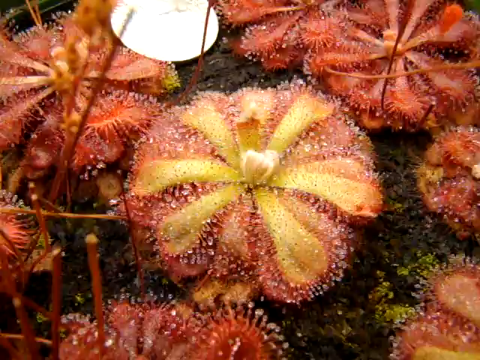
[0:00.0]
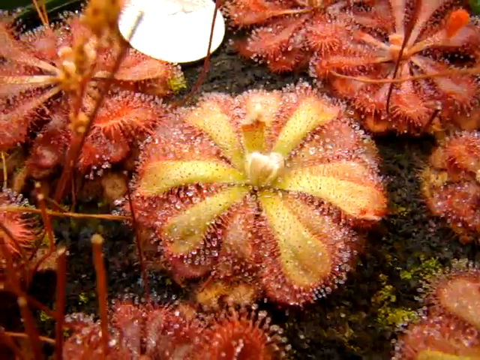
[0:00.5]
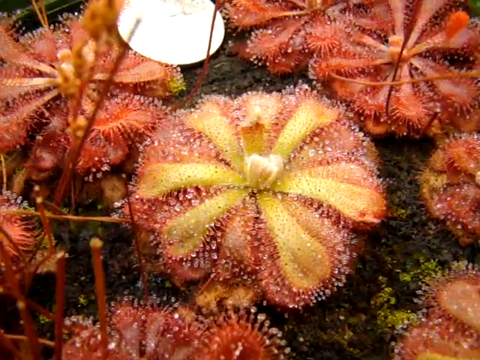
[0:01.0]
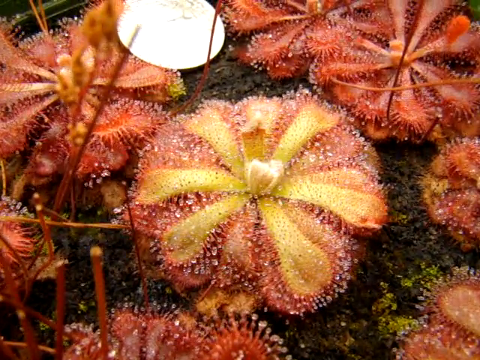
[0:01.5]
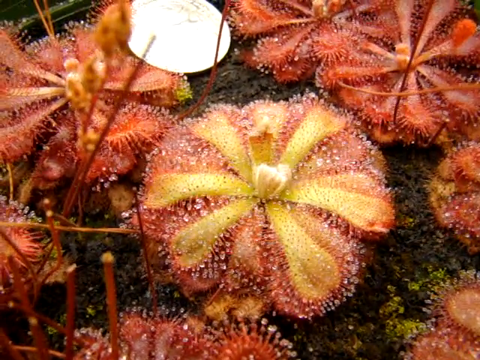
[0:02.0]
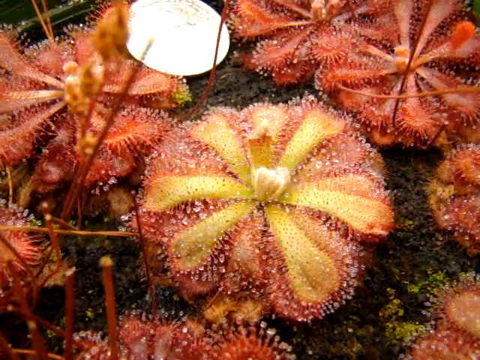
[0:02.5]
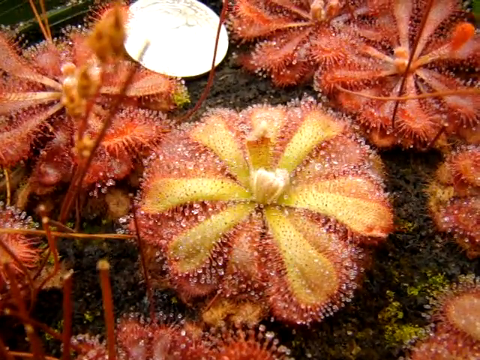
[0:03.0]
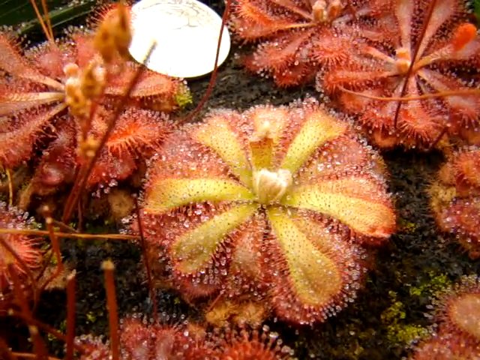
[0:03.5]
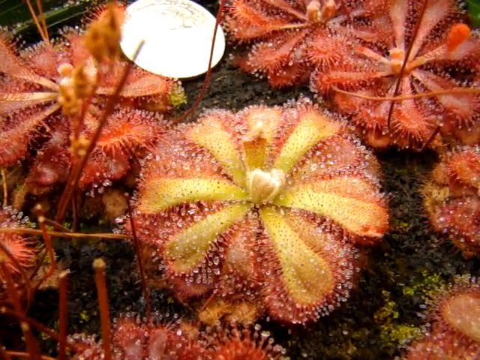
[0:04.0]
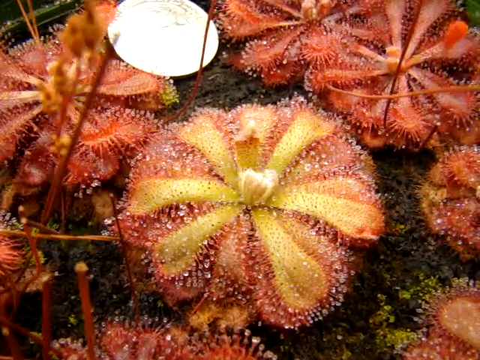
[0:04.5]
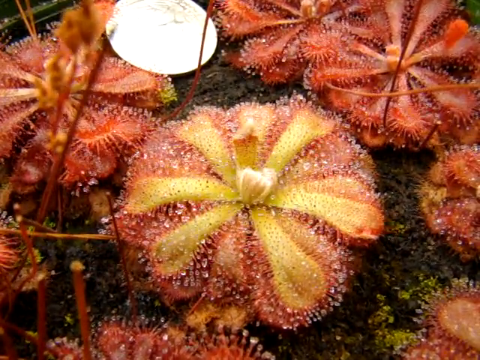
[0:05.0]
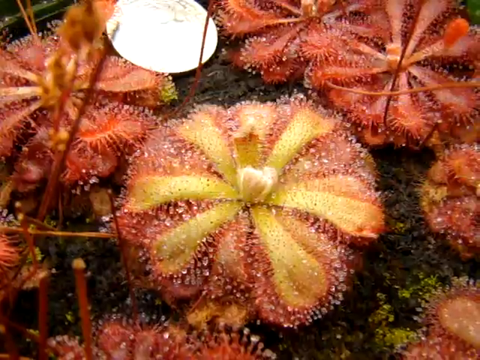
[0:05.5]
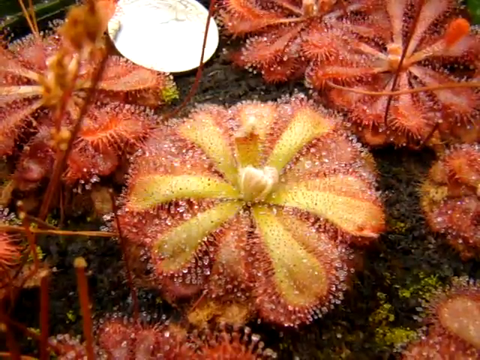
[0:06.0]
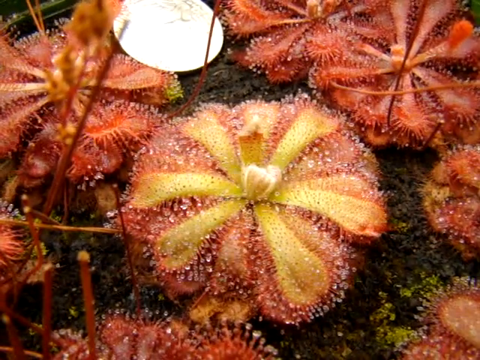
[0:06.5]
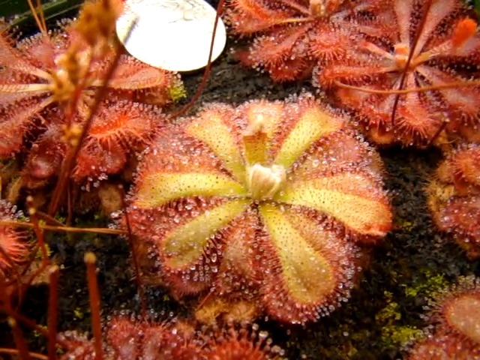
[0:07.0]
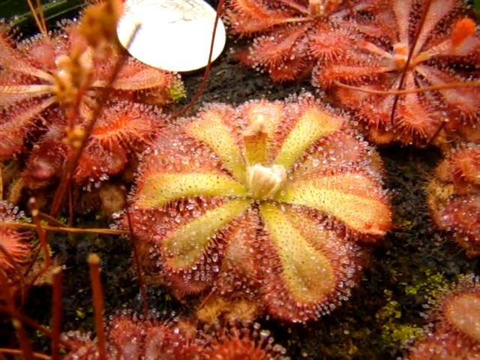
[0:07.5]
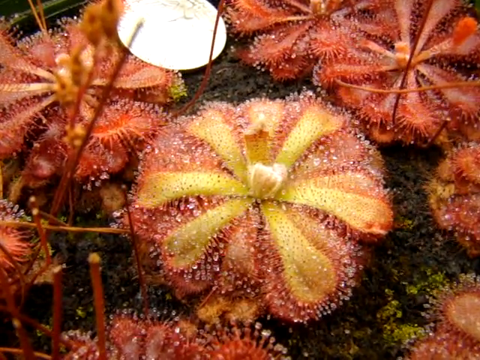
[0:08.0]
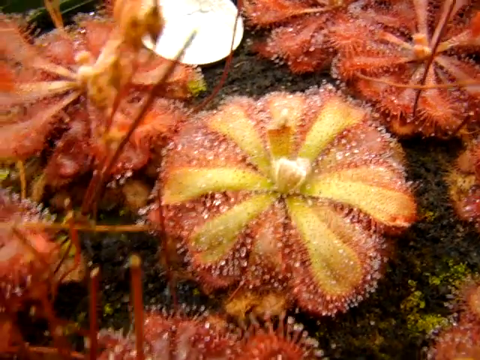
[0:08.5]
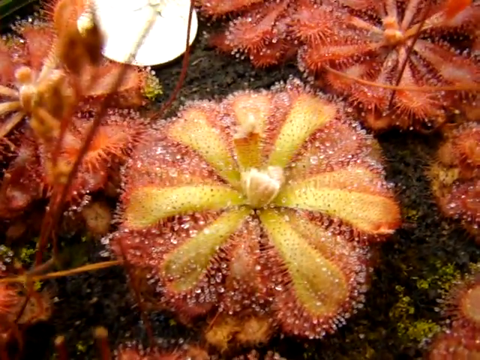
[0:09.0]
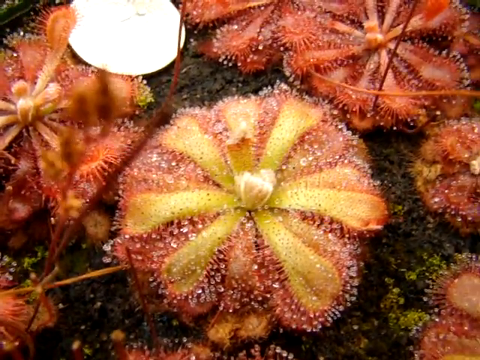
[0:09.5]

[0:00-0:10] A red and yellow plant grows right at ground level, with only a very short stem. It looks as if it has been drizzled on, as there is some water on top of the plant, and there is small greenery right underneath it.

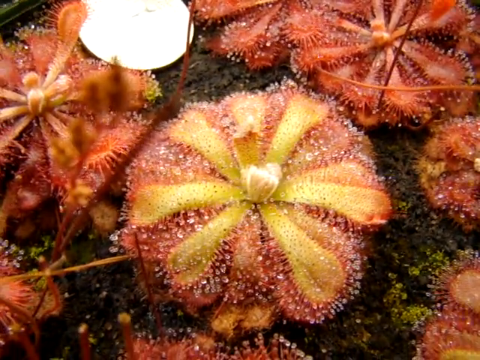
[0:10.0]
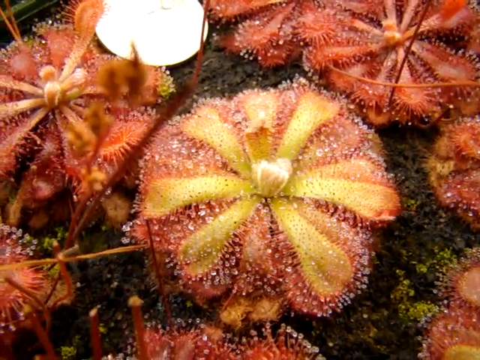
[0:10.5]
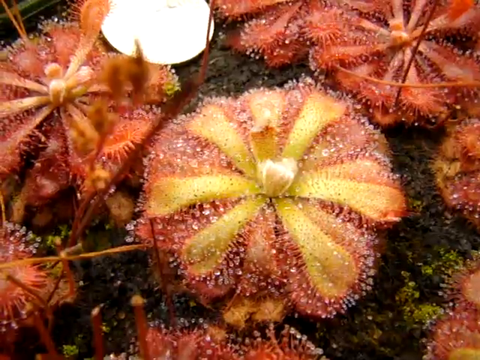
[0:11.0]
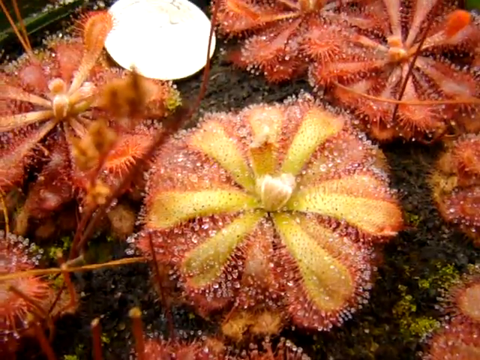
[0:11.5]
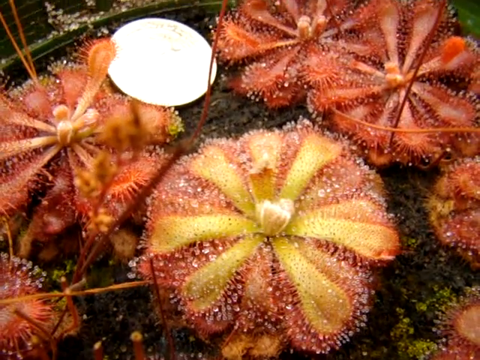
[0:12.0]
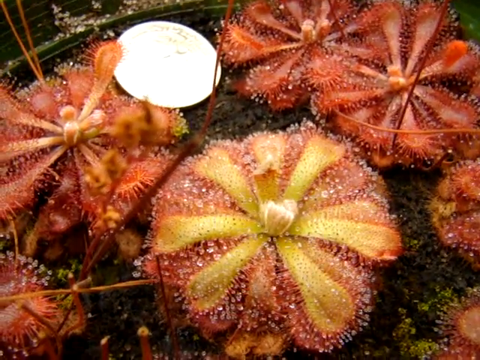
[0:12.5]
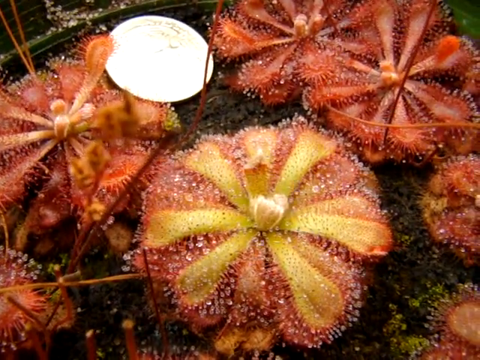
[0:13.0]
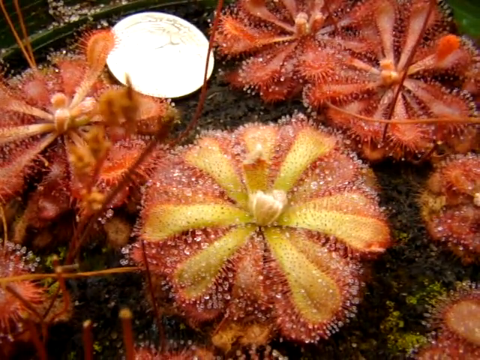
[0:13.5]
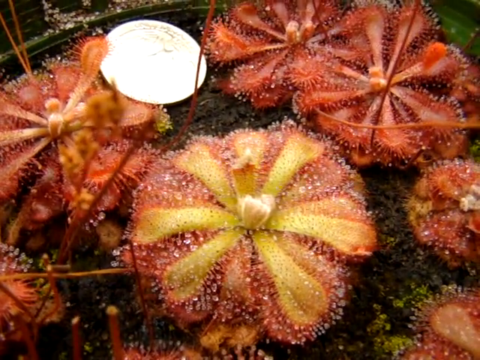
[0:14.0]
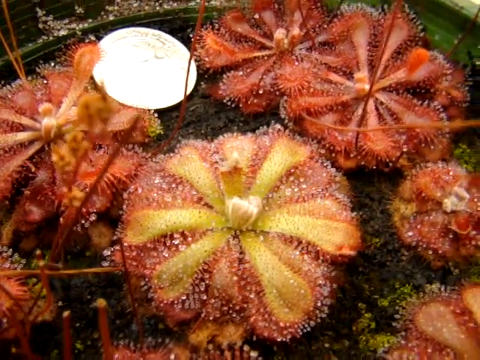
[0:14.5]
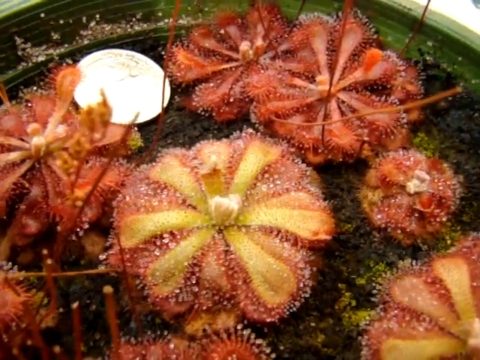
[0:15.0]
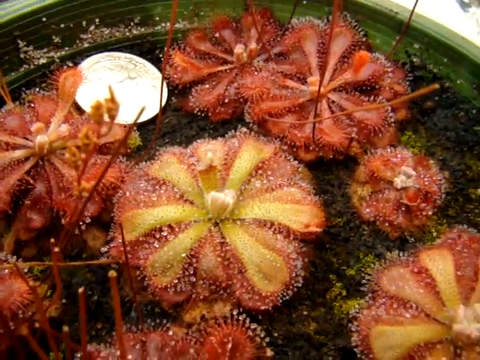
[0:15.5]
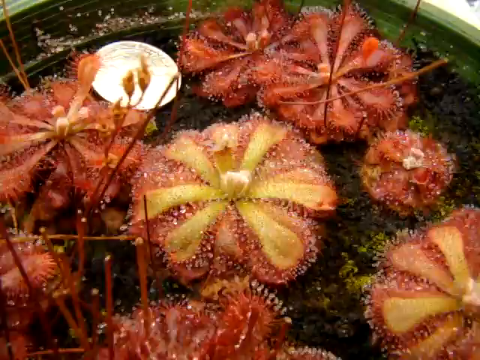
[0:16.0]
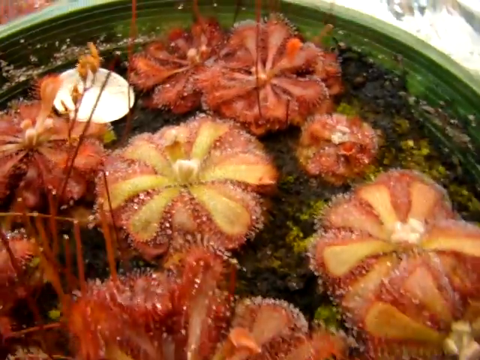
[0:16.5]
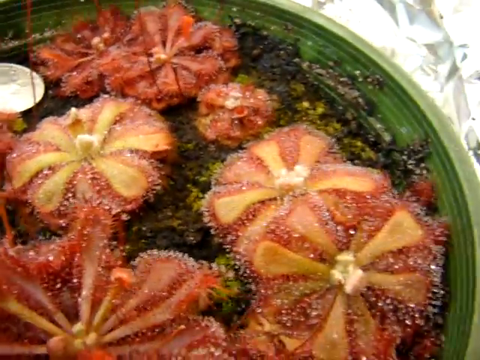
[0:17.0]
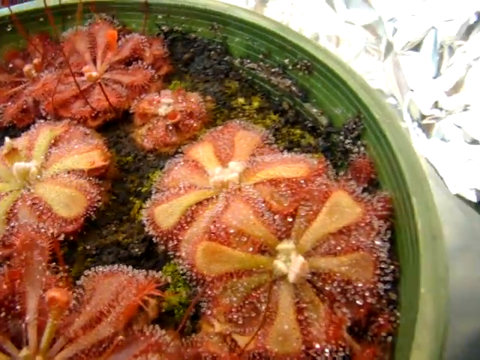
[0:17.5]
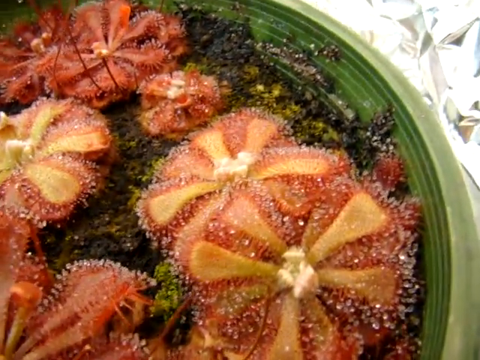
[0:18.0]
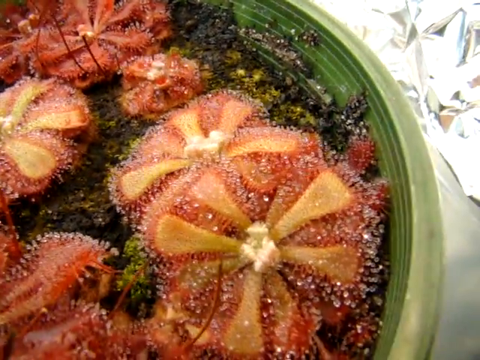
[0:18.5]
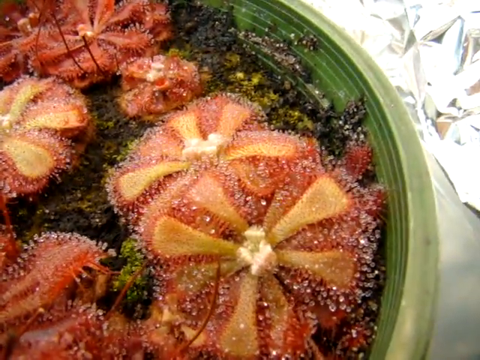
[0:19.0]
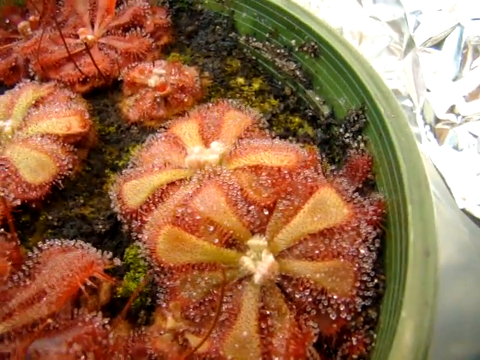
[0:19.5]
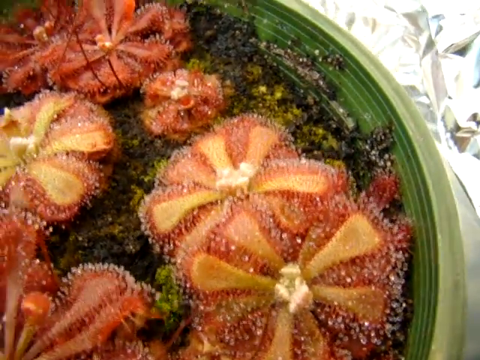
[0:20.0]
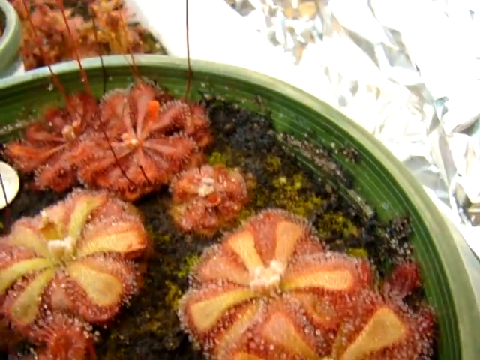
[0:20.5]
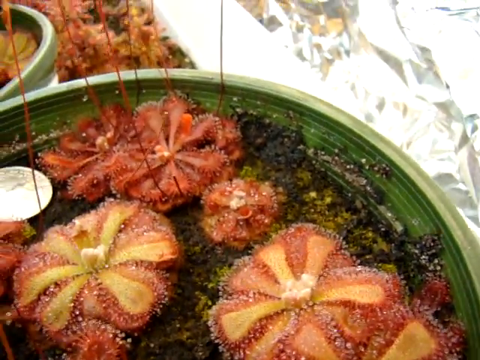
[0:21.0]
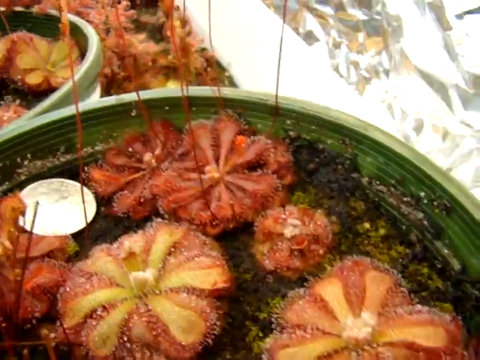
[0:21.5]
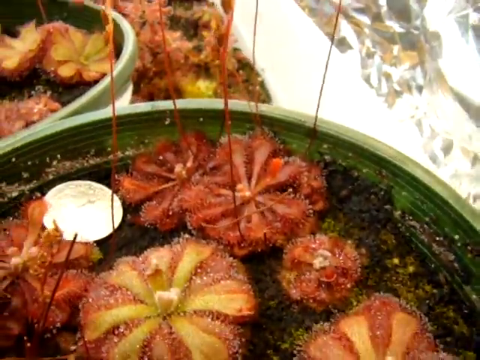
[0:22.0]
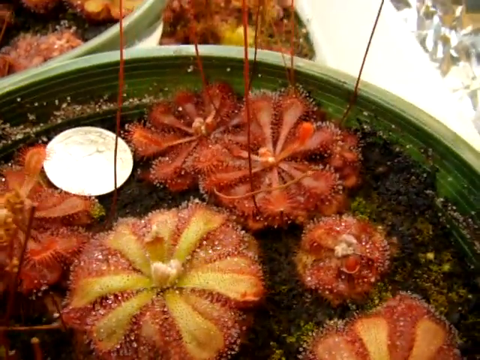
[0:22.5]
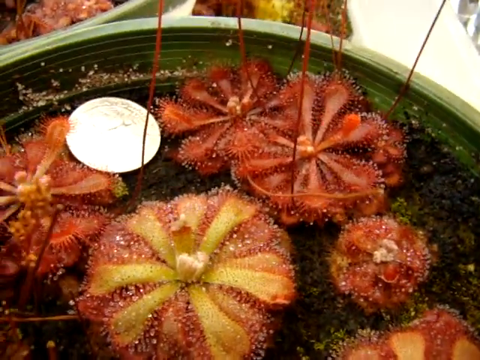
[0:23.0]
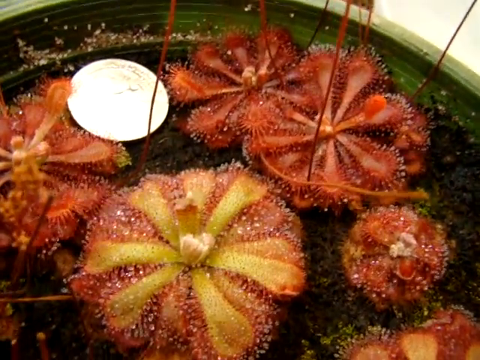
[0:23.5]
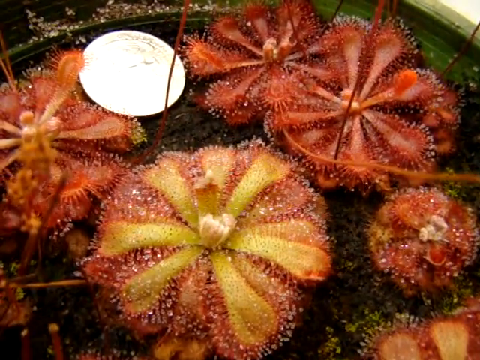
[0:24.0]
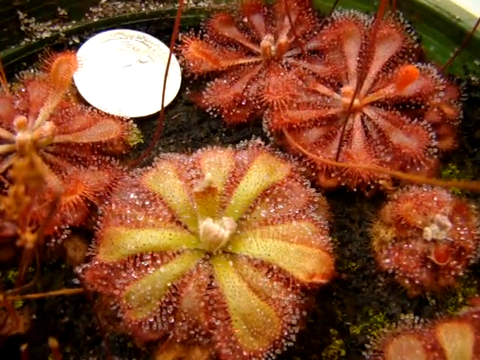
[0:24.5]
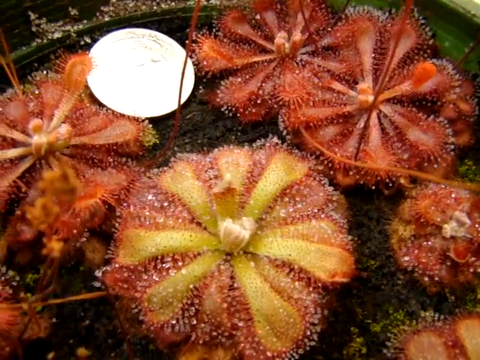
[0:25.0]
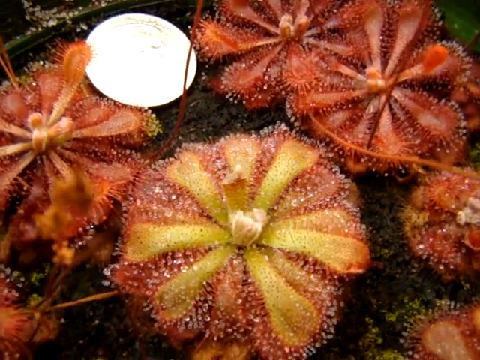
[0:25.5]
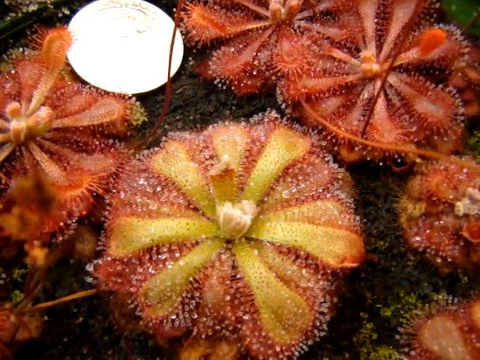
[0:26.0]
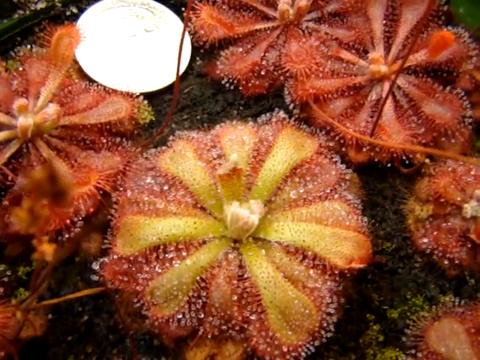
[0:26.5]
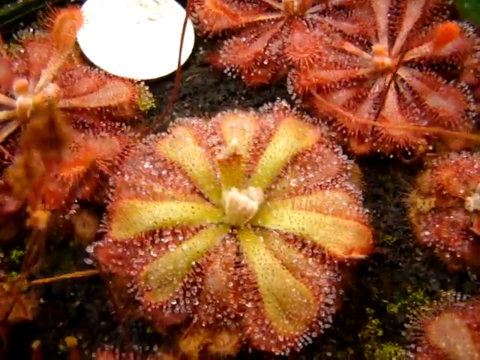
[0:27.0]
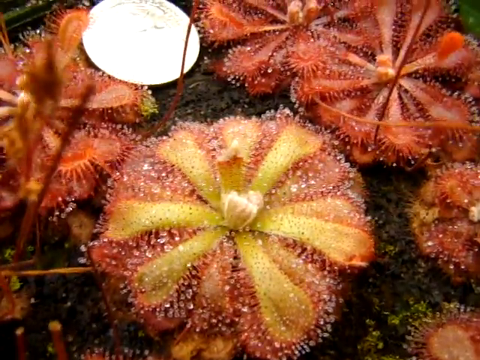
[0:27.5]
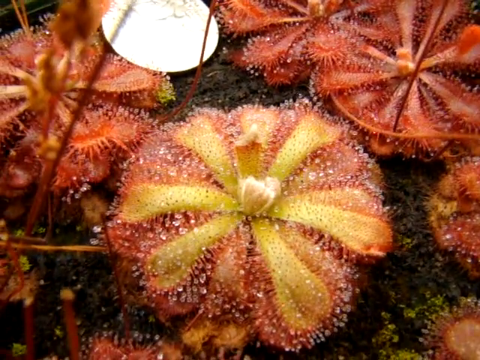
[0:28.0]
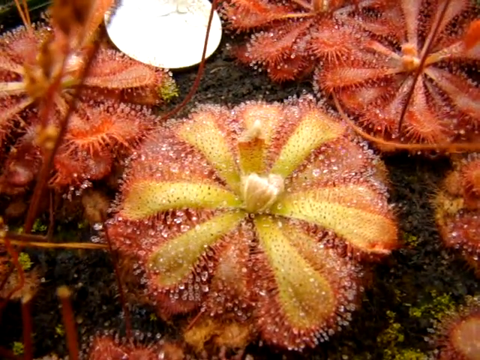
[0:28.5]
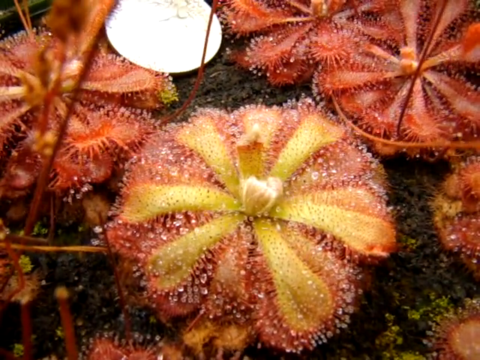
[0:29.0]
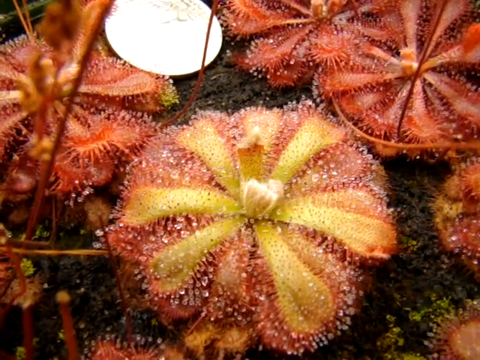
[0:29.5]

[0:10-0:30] The plant is shown, apparently in a picture, with the view zooming in and out on it. The plant is in a pot, and there is something that looks like a white plate. The pot is green, and other potted plants are visible on the side, but the focus is on this one potted plant. The plant seems to have no stem and to grow right at ground level. It is red with a touch of yellow and orange, and it looks like it has feathers, which are wet, apparently from drizzle or morning wetness.